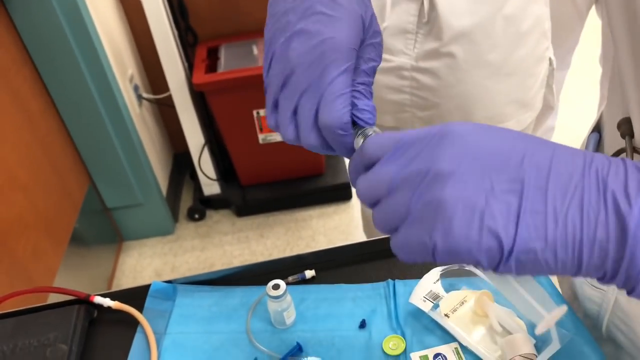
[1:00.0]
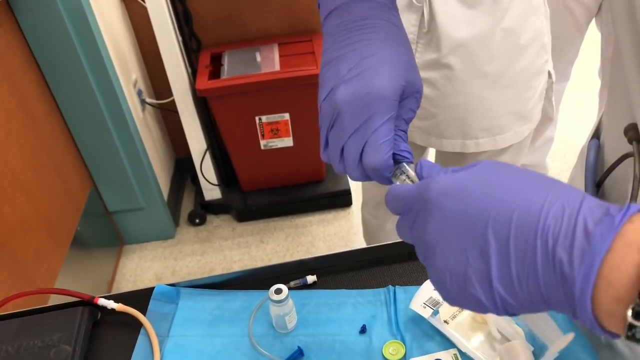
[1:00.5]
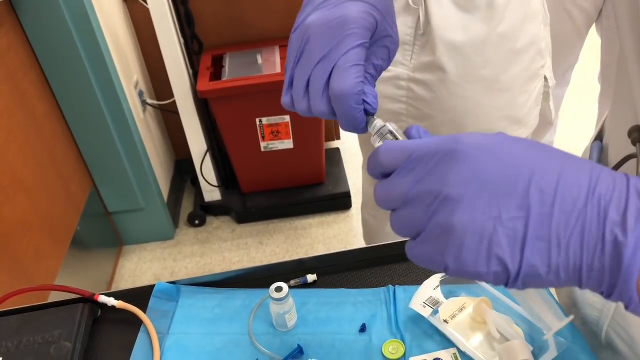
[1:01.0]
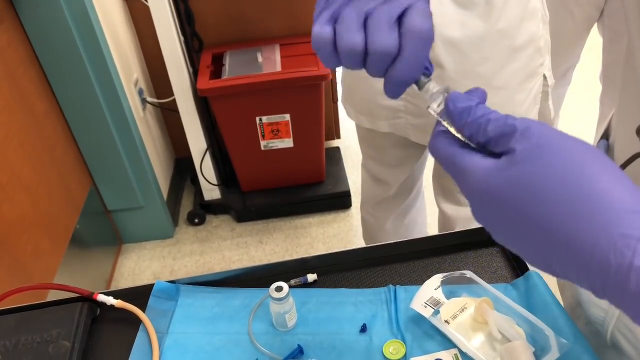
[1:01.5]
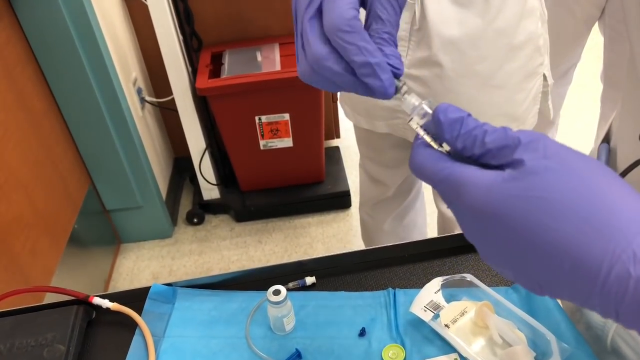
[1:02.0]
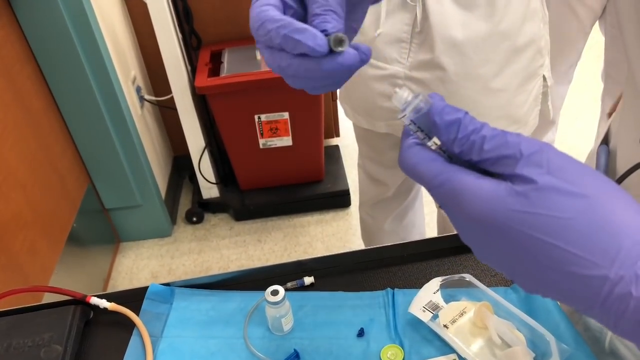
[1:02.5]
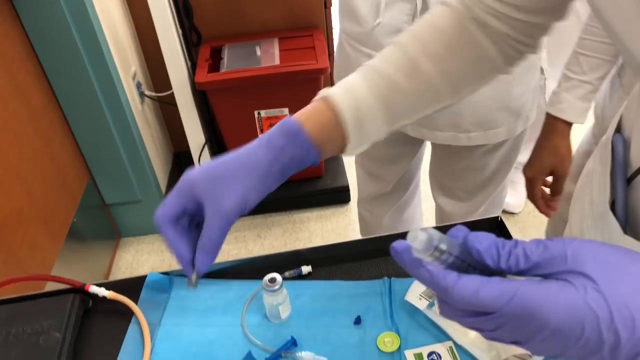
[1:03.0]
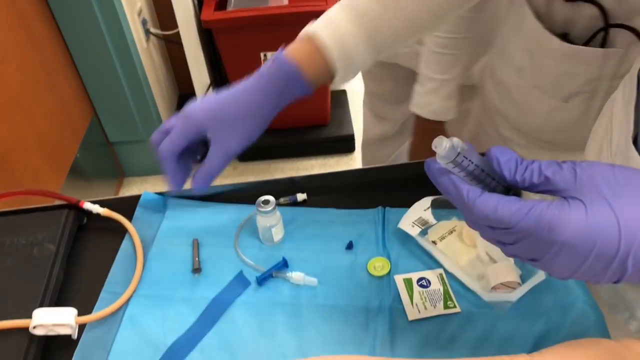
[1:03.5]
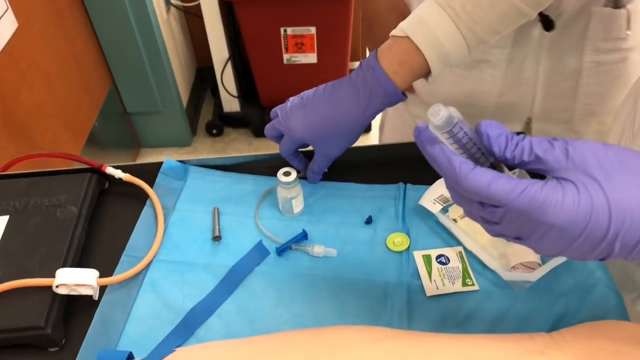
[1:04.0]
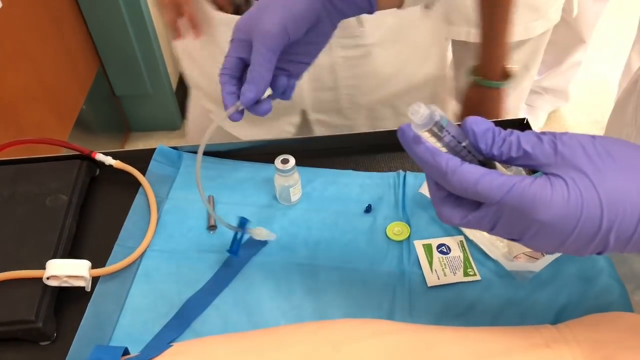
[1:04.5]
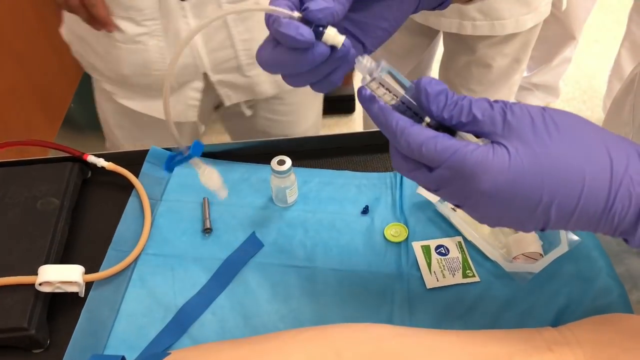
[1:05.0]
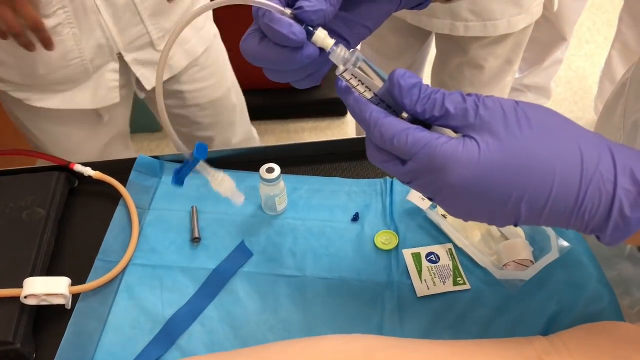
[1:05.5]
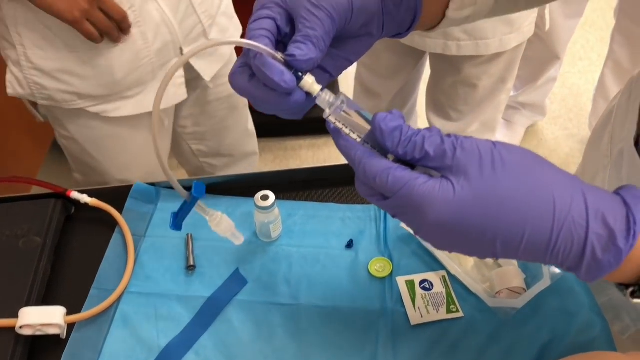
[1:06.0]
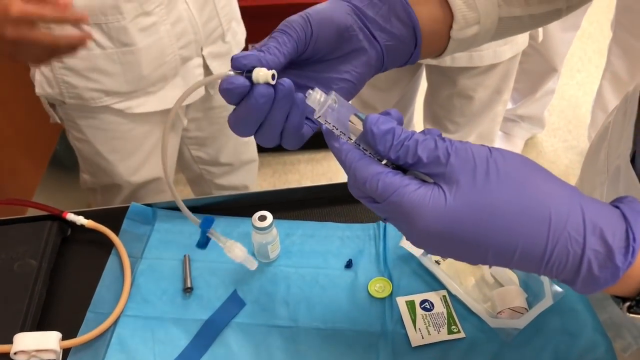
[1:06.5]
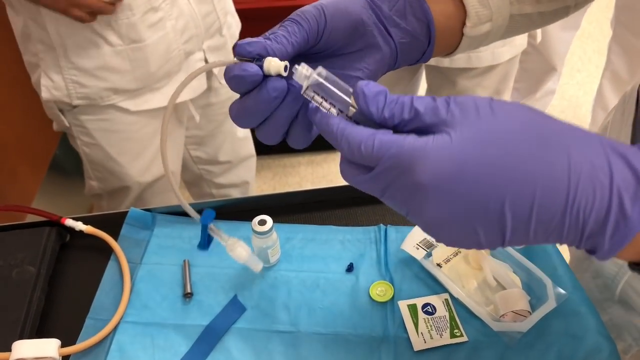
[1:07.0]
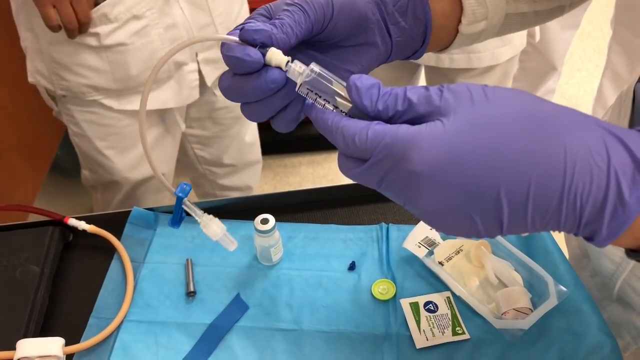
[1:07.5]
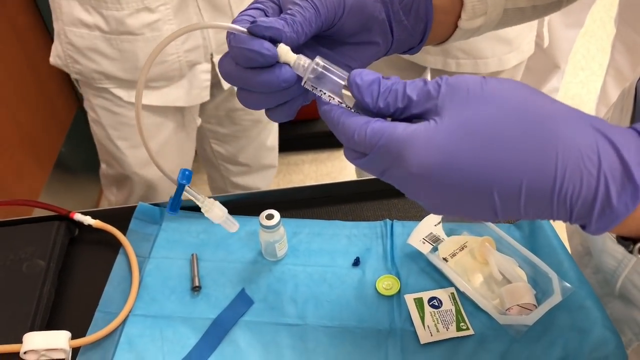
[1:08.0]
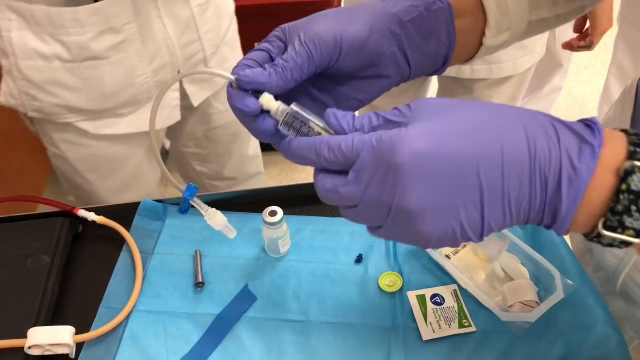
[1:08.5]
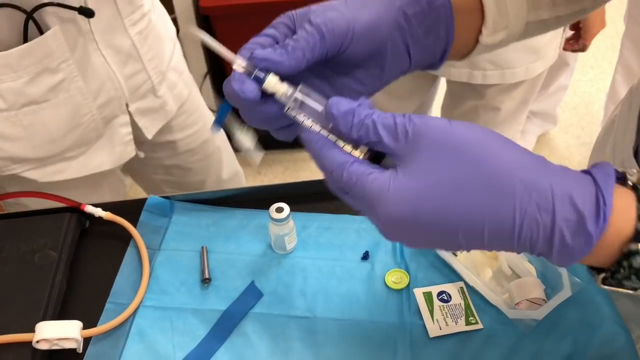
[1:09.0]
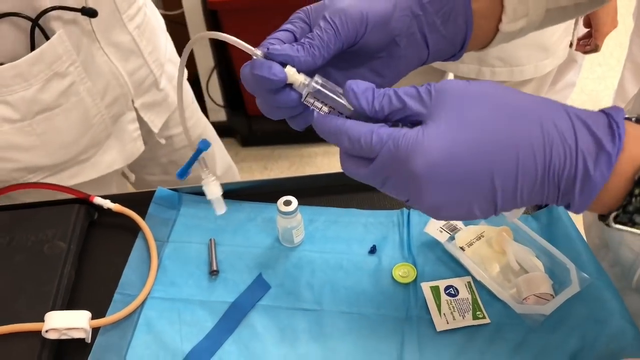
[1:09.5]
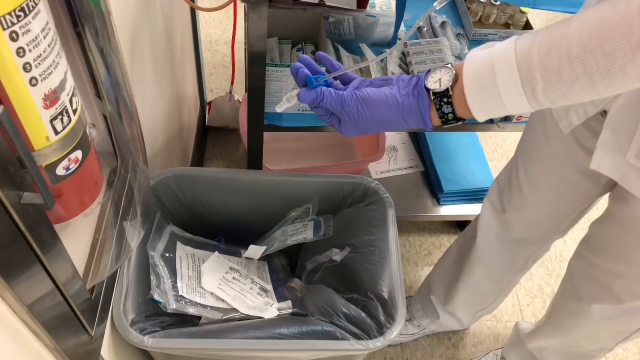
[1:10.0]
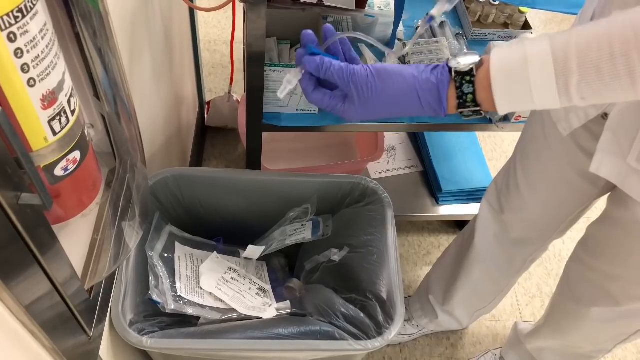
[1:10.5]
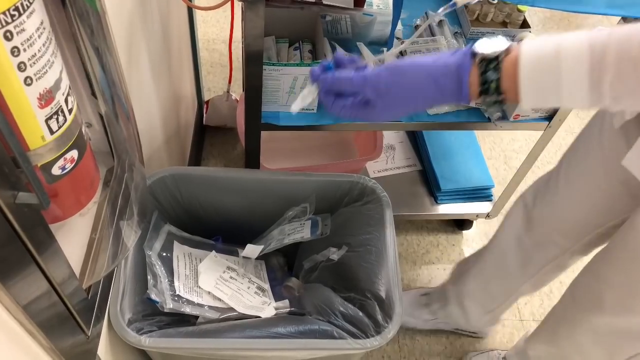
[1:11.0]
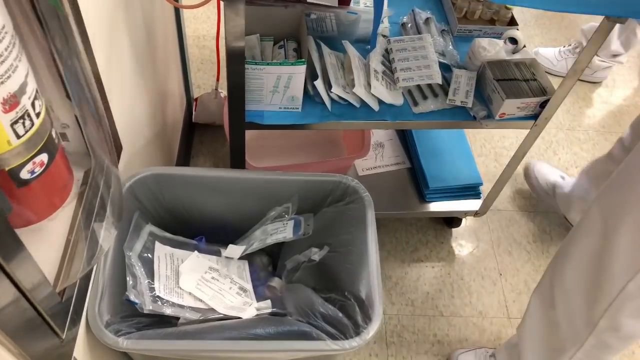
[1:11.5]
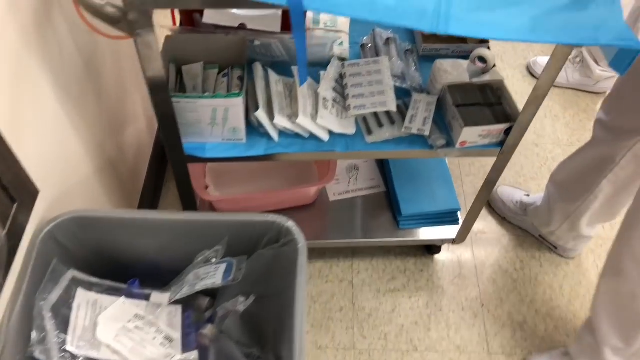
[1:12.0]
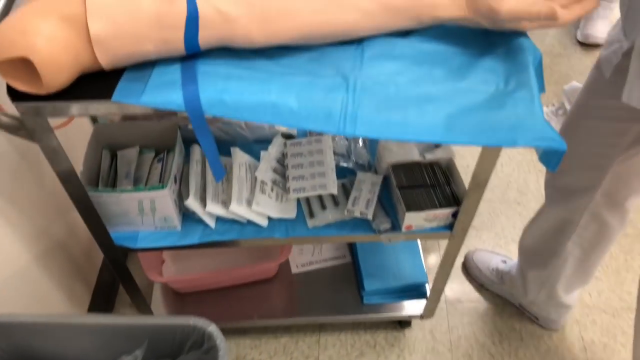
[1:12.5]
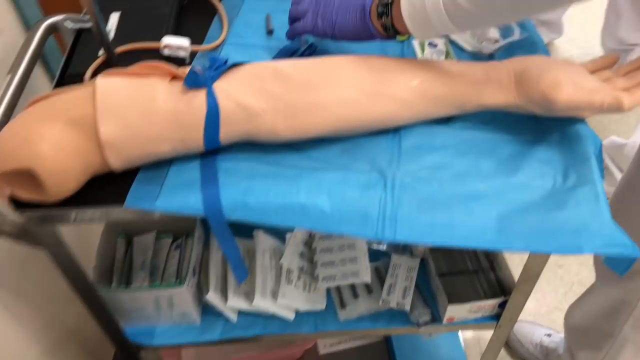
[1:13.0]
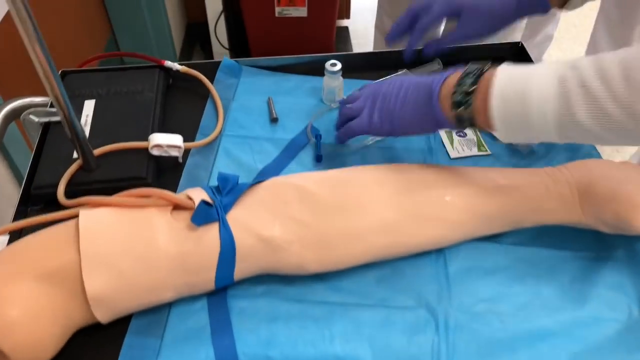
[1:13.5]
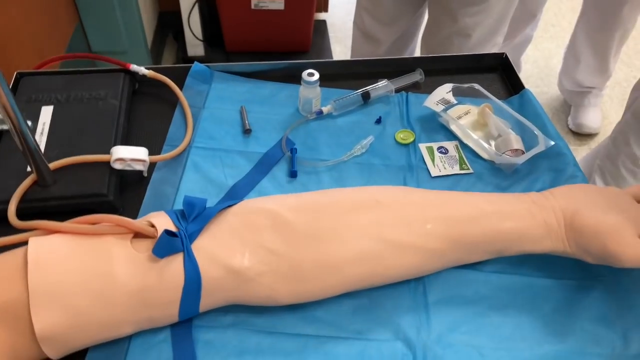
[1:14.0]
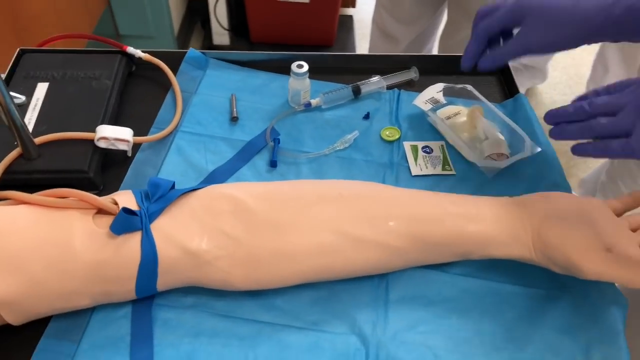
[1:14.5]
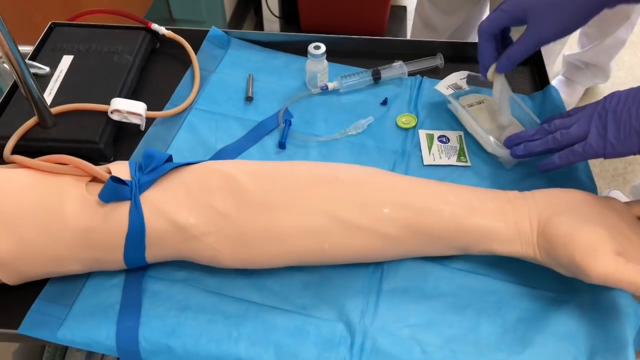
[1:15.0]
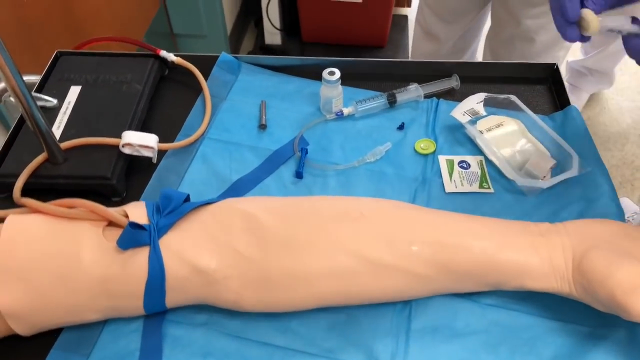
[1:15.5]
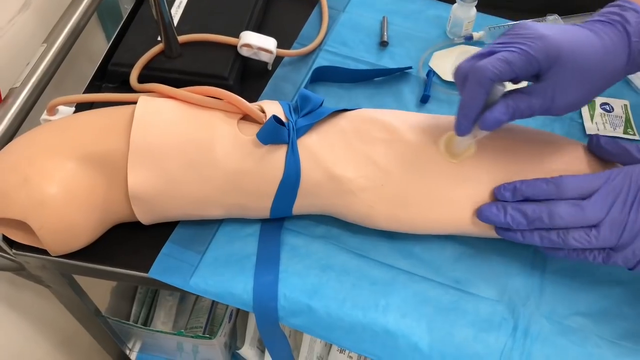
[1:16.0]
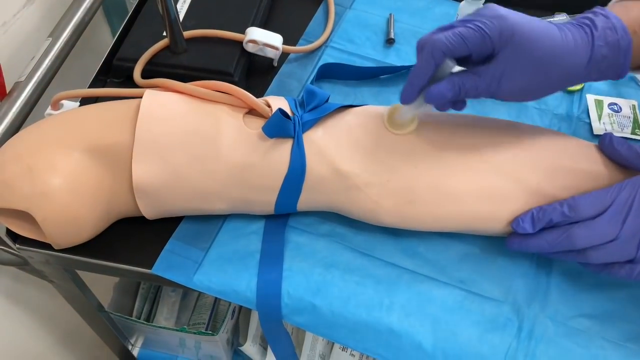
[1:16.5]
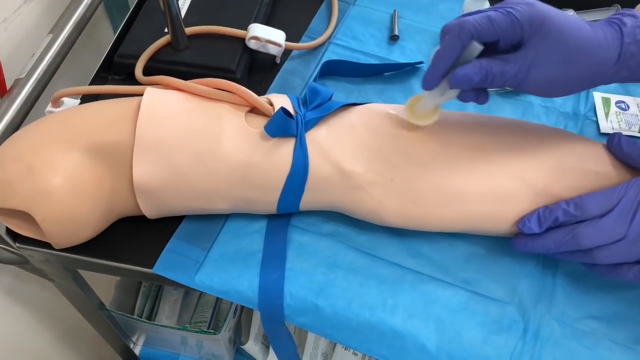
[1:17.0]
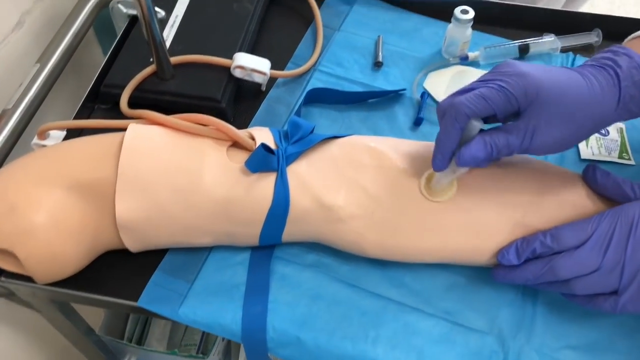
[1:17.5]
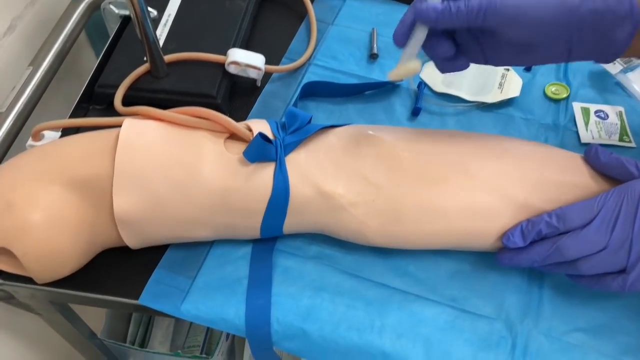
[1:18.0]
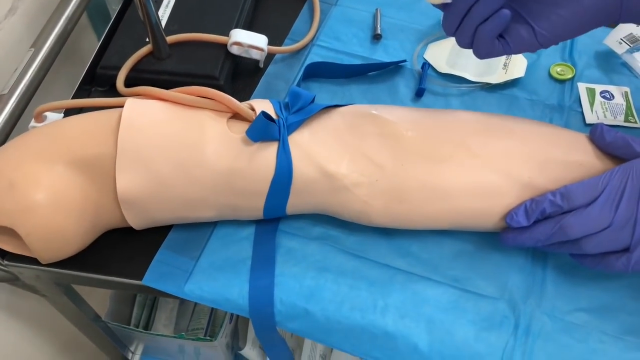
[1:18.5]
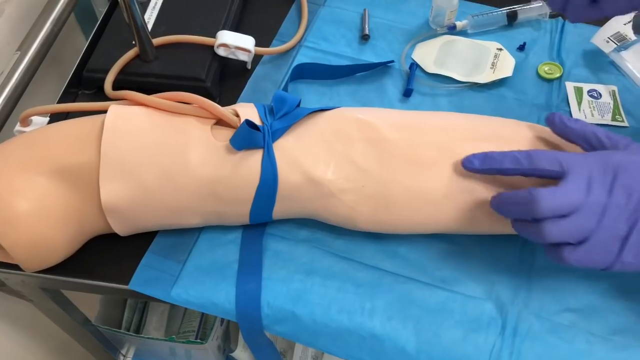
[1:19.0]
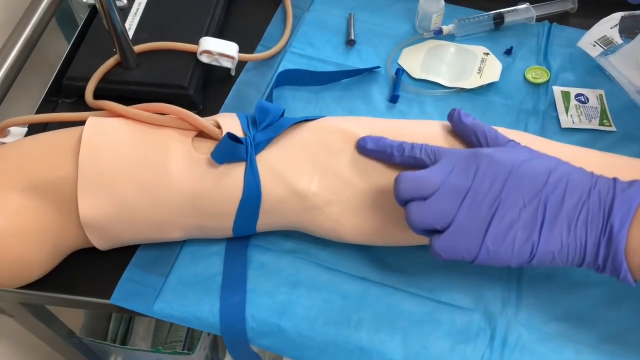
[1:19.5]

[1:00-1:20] There appear to be four medical professionals, all in white outfits, who appear to be working as a group huddled together around a black cart. On top of the black cart is a blue medical mat, and on the mat appear to be various medical supplies, such as a practice phlebotomy arm, a needle, a vial filled with liquid, a glass vial filled with clear liquid and some alcohol pads. One of the medical professionals grabs the needle, takes the needle head off the vial and attaches a tube with her right hand while holding the needle vial with her left. She lays the vial back onto the blue medical mat, then with her right hand picks up an object that appears to be an alcohol swab and rubs it onto the forearm of the practice arm.